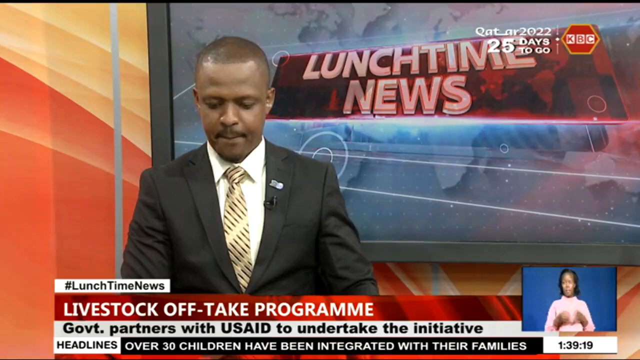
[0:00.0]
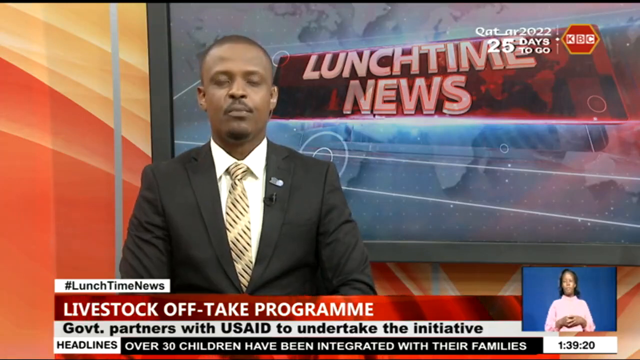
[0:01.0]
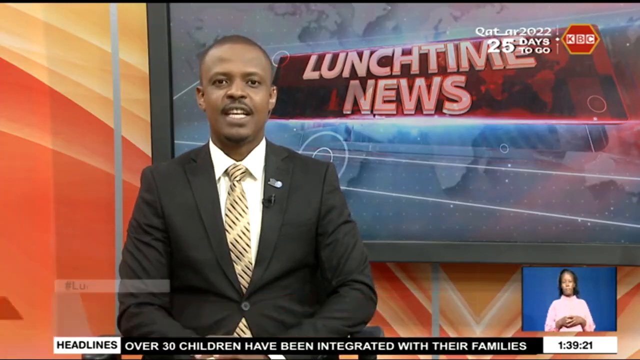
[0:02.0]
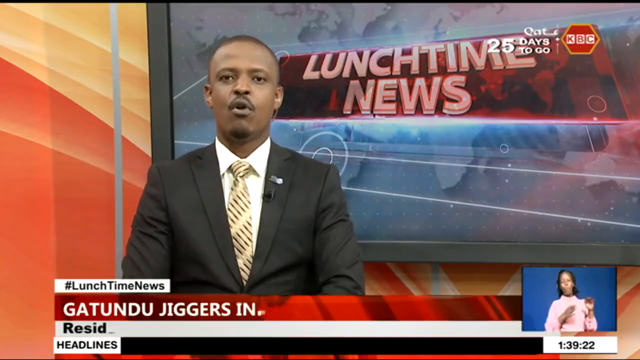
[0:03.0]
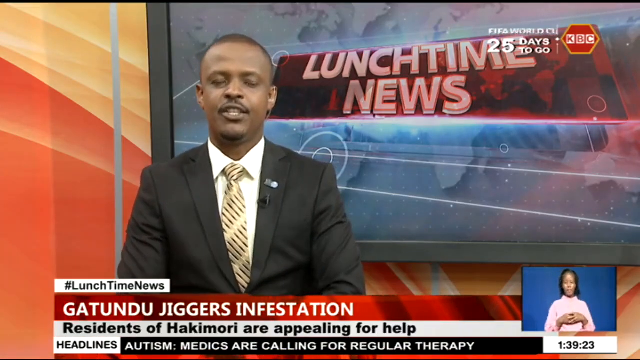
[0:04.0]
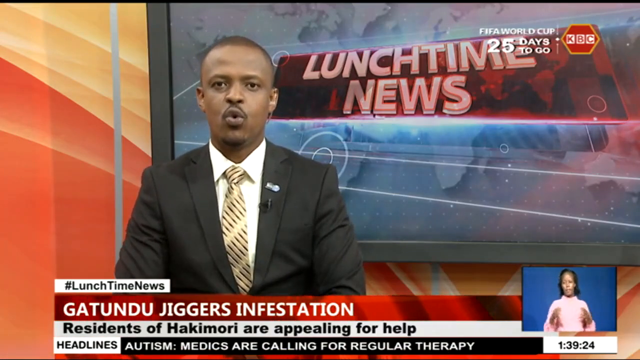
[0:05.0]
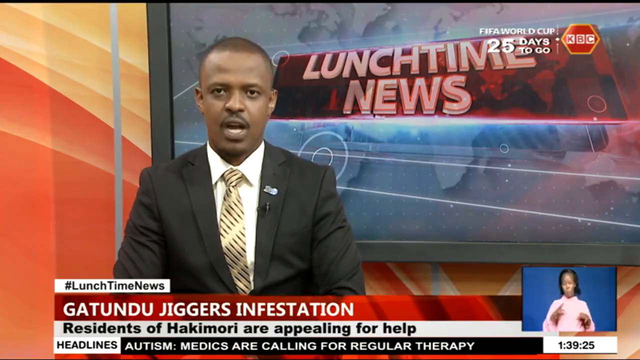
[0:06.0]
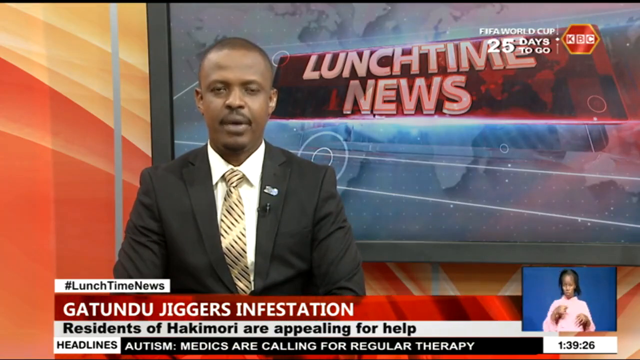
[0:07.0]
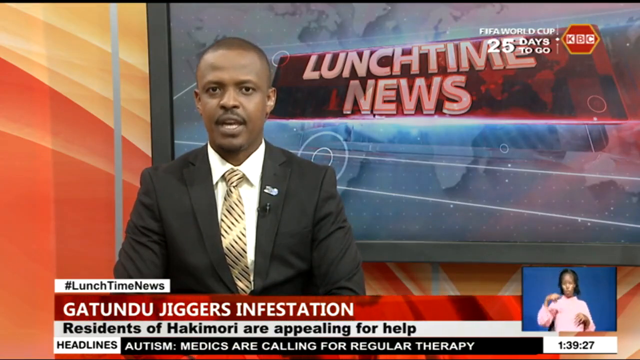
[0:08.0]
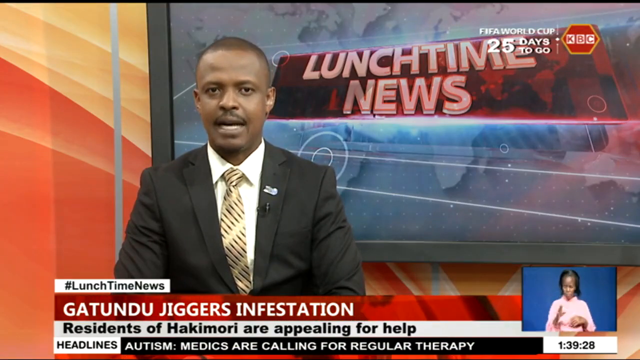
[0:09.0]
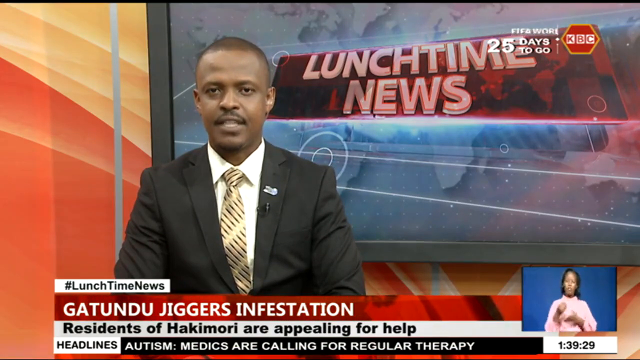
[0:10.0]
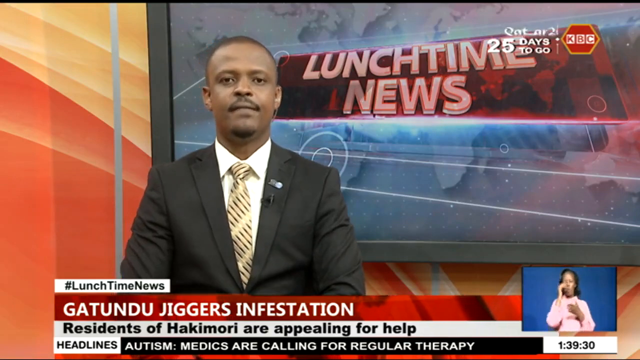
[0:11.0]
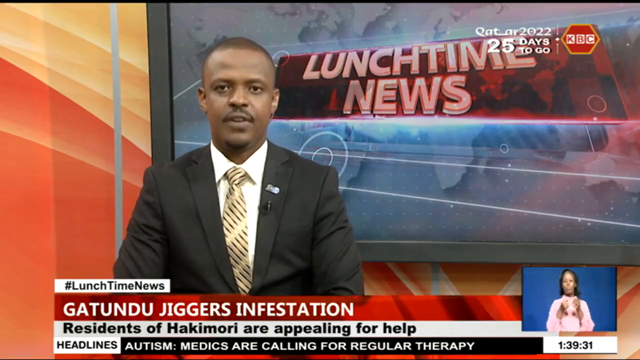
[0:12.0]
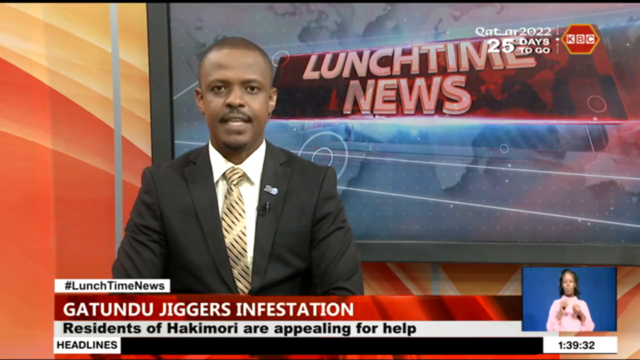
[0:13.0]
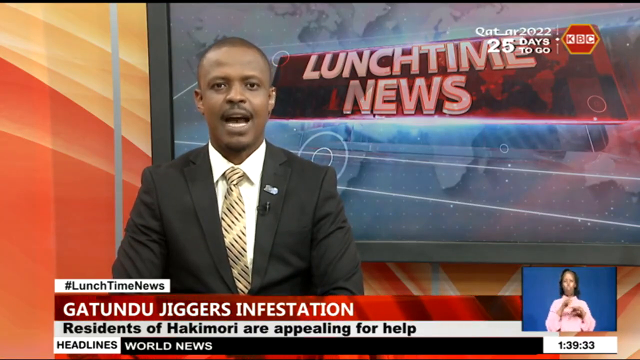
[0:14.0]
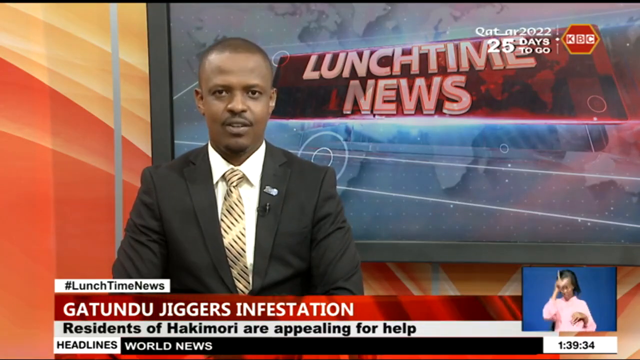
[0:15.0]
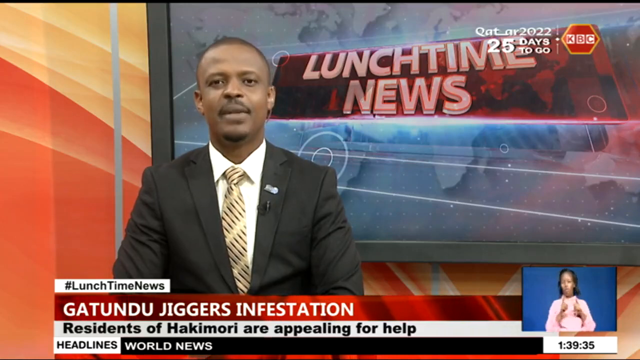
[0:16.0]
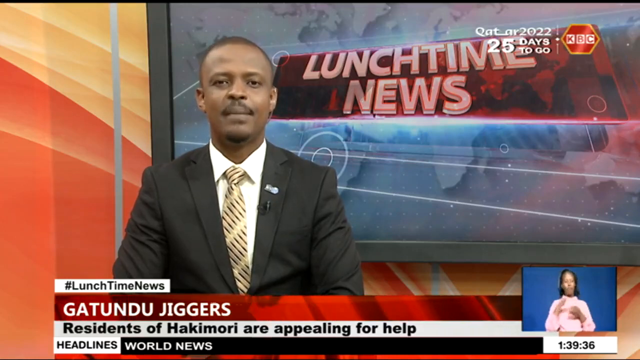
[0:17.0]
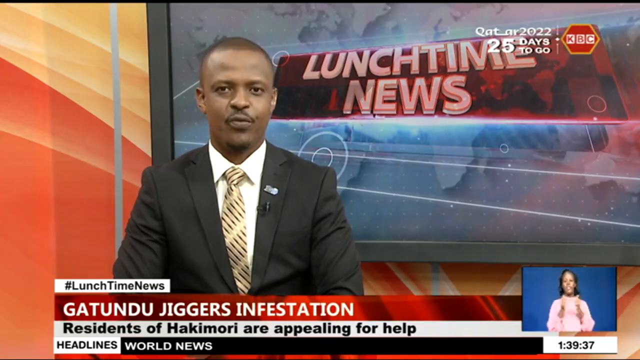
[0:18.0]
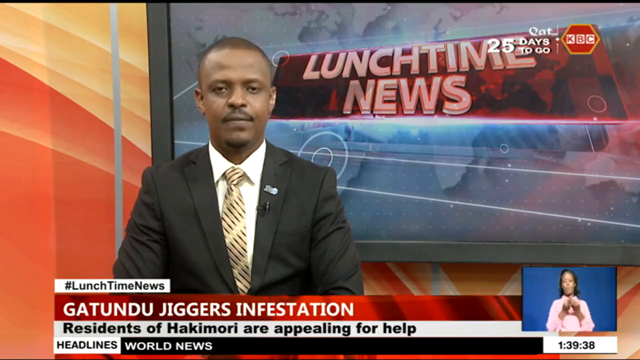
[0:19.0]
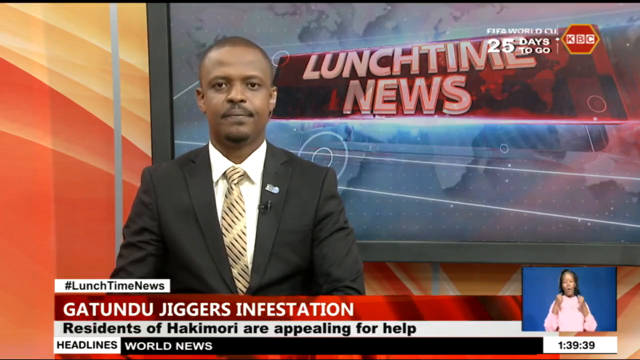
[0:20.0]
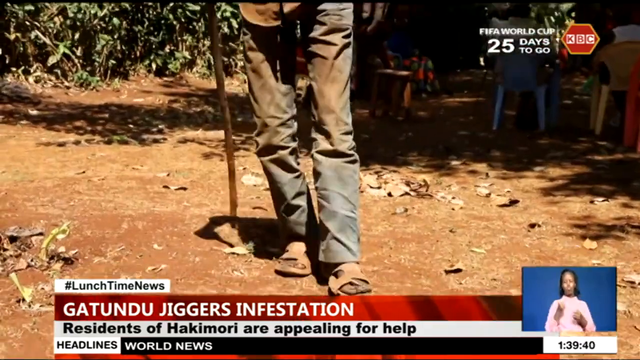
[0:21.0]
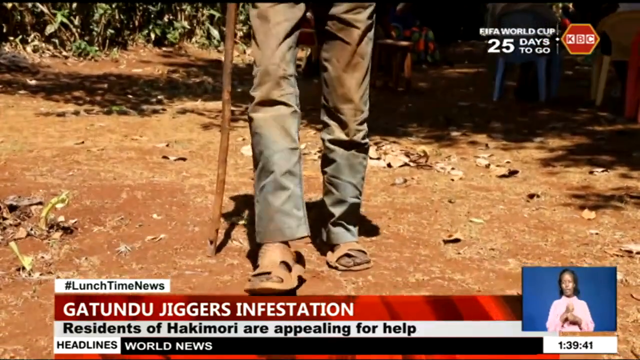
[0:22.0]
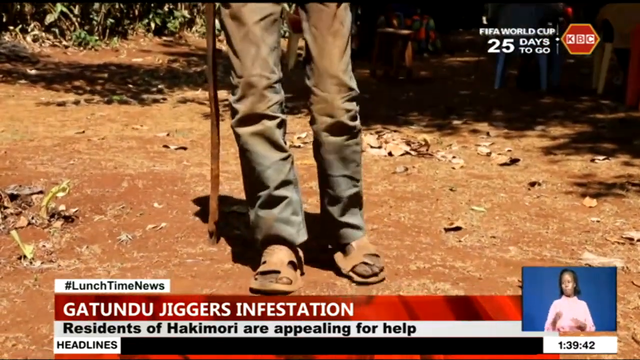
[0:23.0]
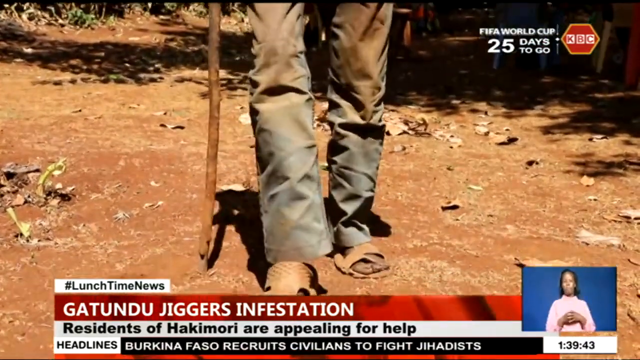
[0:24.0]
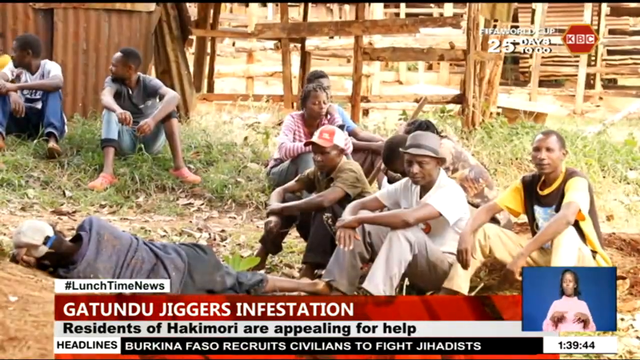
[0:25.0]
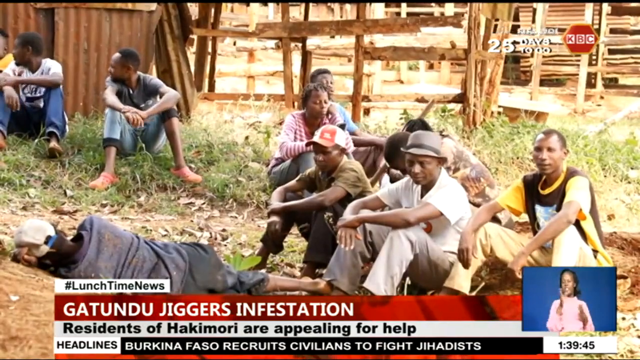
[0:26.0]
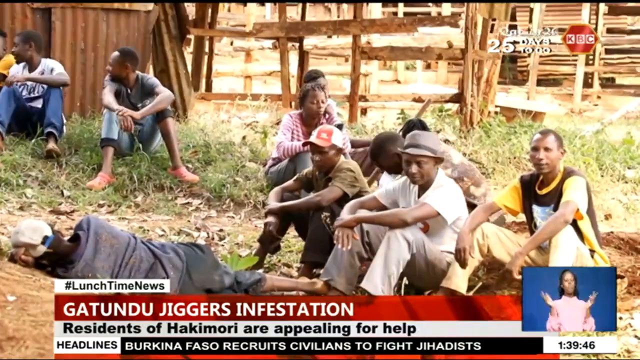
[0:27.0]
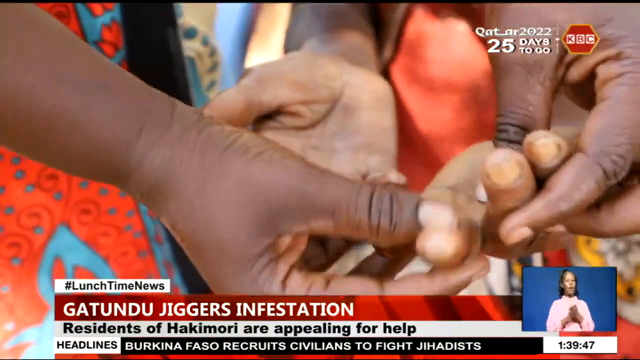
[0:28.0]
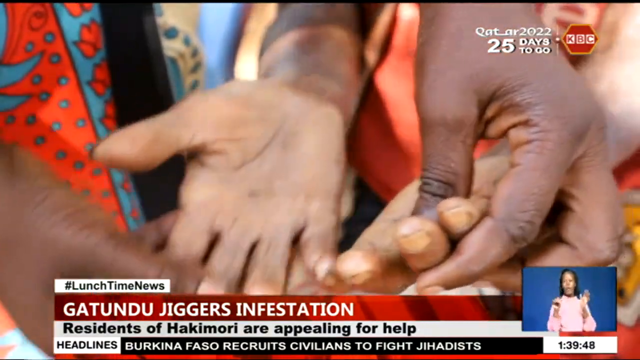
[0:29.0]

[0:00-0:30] This is a newscast. In the opening scene, a monitor in the back has "lunchtime news" written on it. On the bottom left is the text "Livestock Outtake Program. Government partners with USAID to undertake the initiative." A sign language interpreter is on a small monitor on the bottom right. At the beginning, a man is sitting in front of the larger monitor, just off center to the left. The sign language interpreter is a brown-skinned woman, and the man is also brown-skinned. The text "Katanda Jiggers Infestation. Residents of Hakamari are appealing for help" then appears at the bottom left, with "#lunchtime news" above it. The sign language interpreter is signing. The numbers 1 hour 39 minutes 39 seconds appear at the bottom and keep progressing. The scene changes to a brown-skinned man walking along a dirt path with a cane, wearing dirty jeans and sandals. Next, numerous brown-skinned men are sitting and laying on a dirt field. Then there is a shot of two sets of brown-skinned hands outside: one set is turned up, and the other hands are holding the upturned hands.